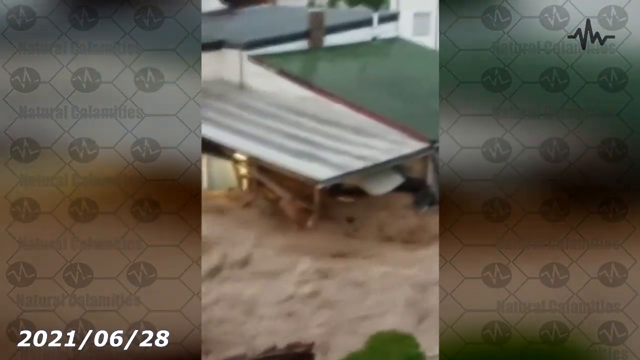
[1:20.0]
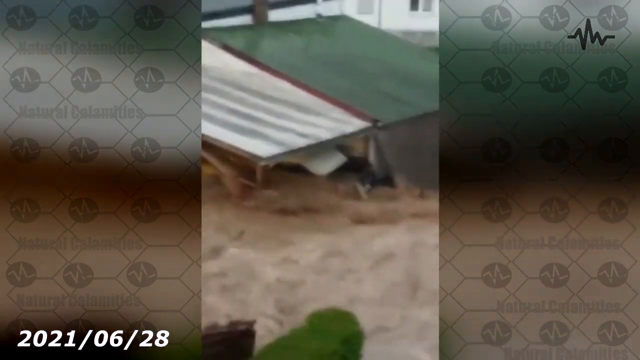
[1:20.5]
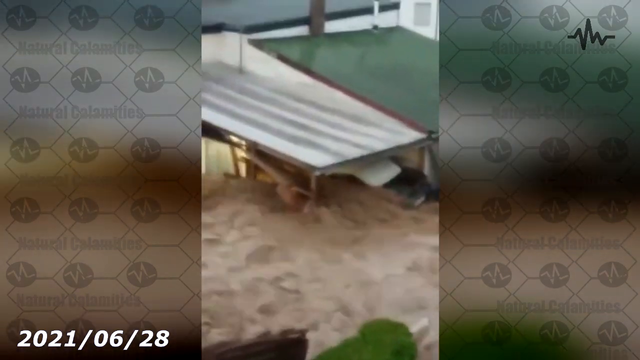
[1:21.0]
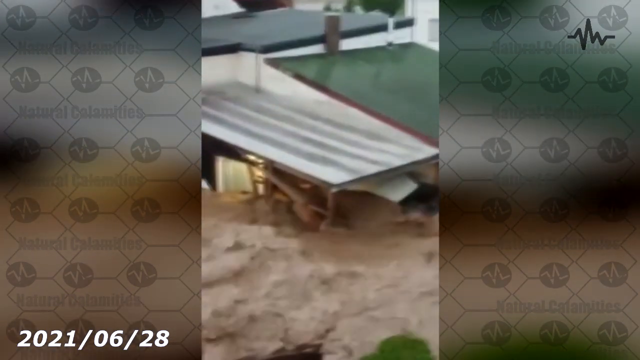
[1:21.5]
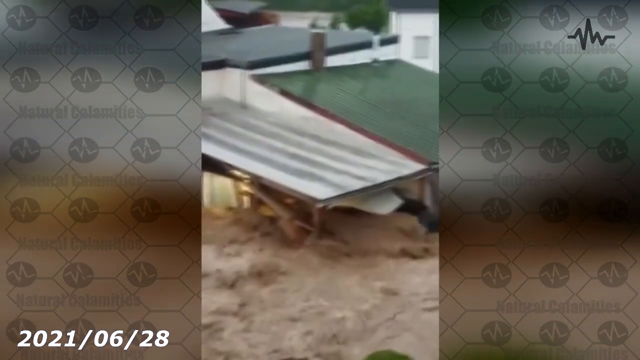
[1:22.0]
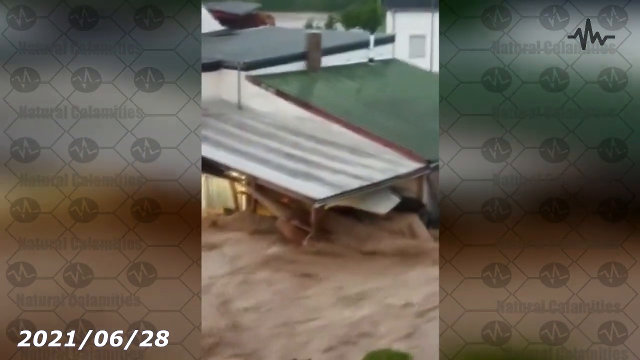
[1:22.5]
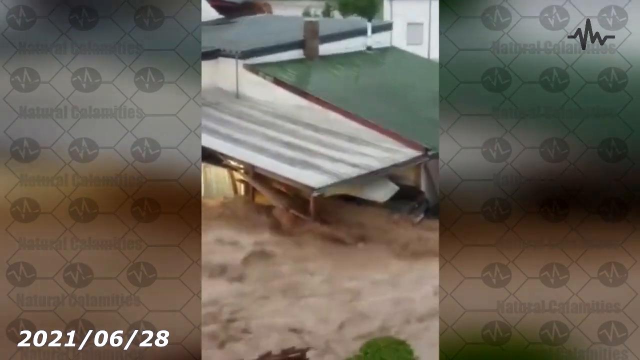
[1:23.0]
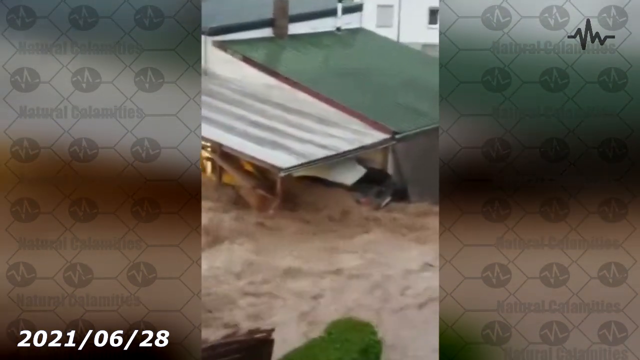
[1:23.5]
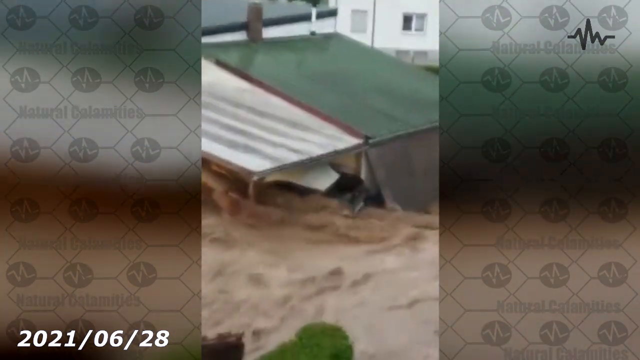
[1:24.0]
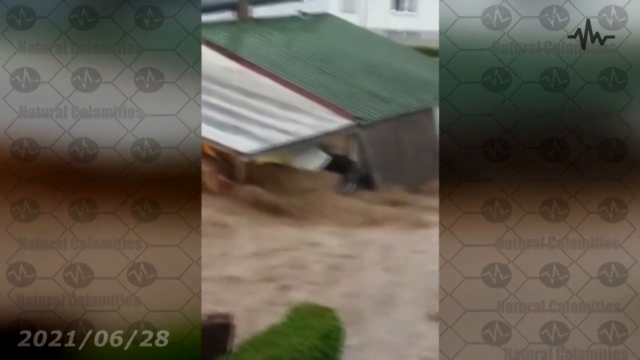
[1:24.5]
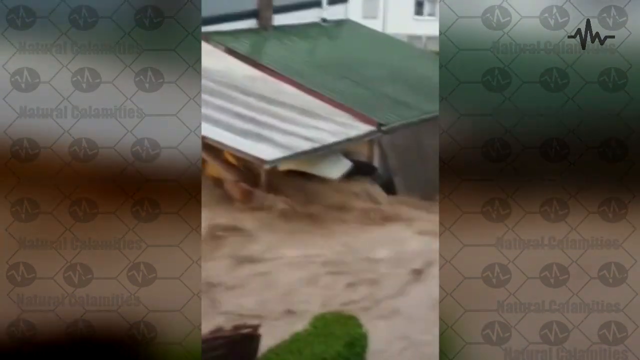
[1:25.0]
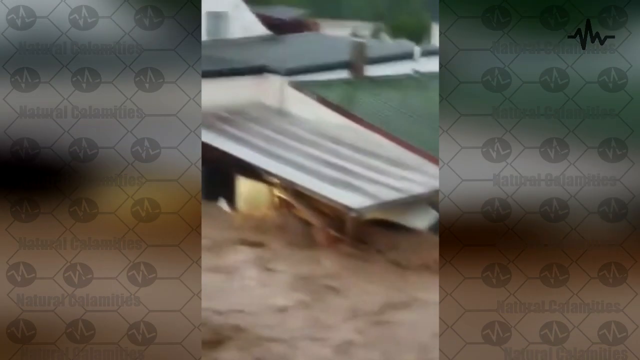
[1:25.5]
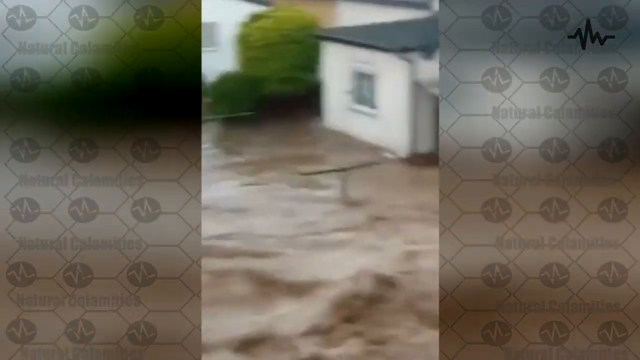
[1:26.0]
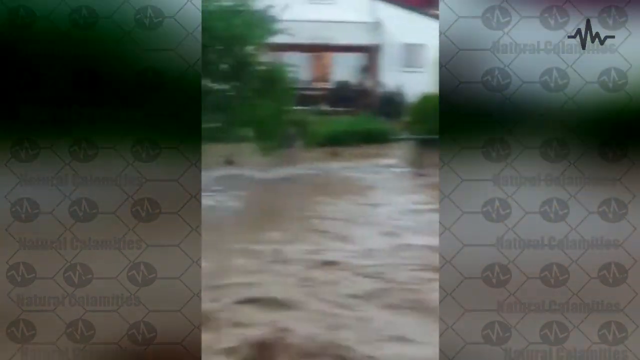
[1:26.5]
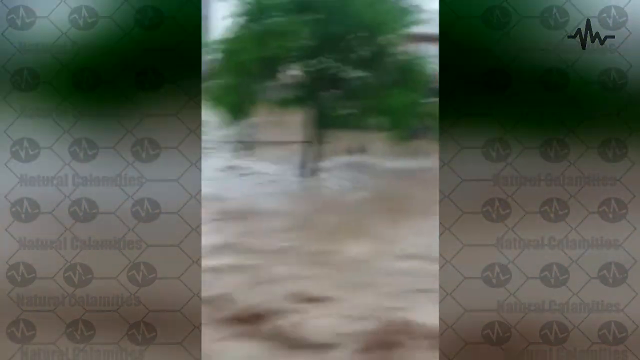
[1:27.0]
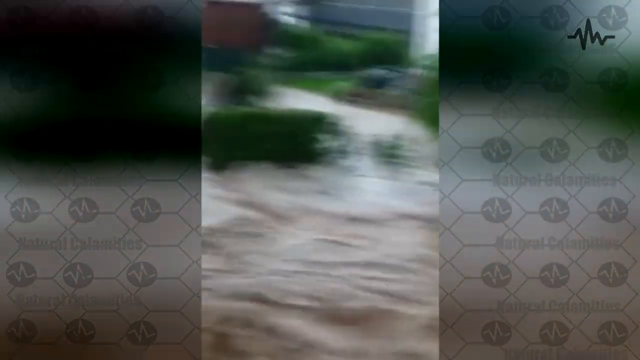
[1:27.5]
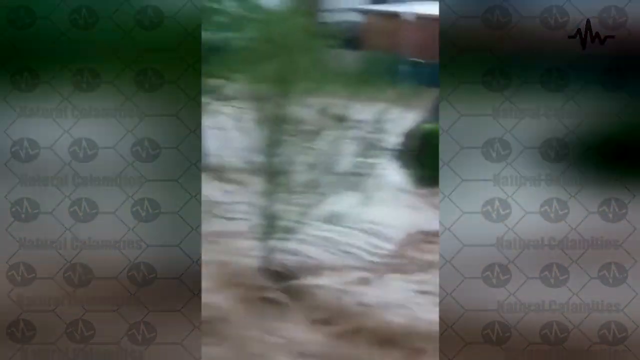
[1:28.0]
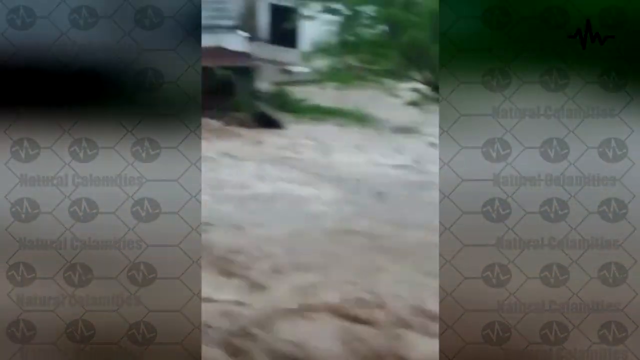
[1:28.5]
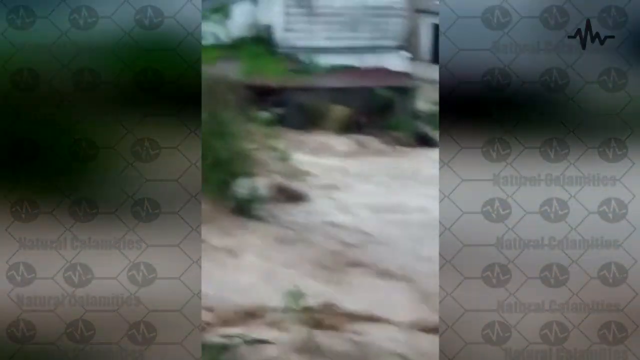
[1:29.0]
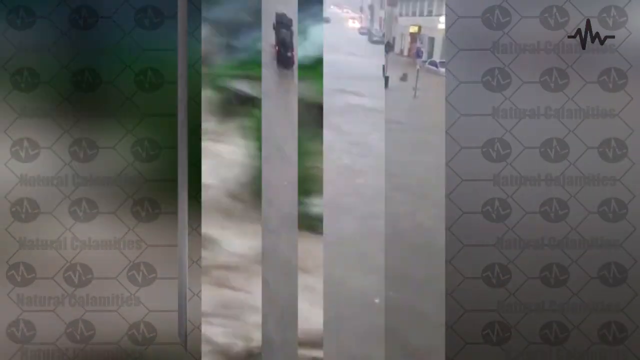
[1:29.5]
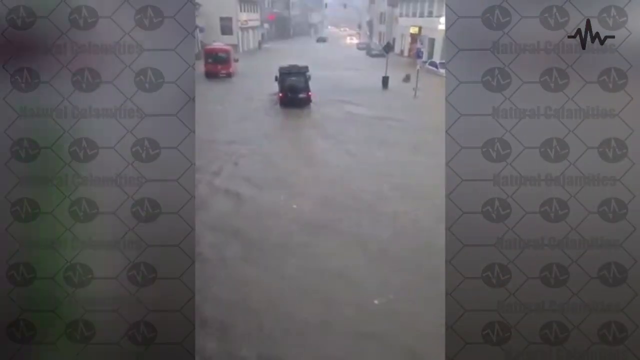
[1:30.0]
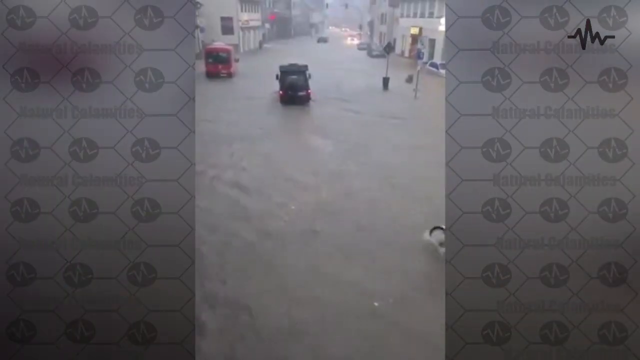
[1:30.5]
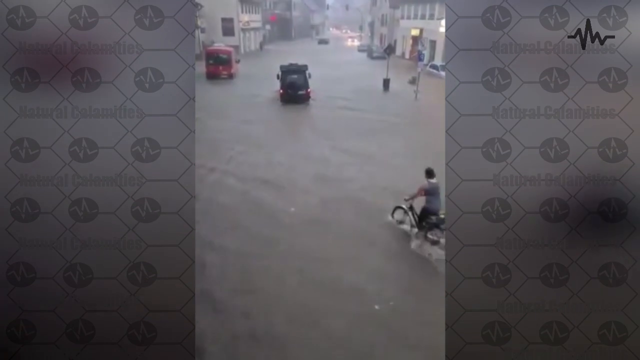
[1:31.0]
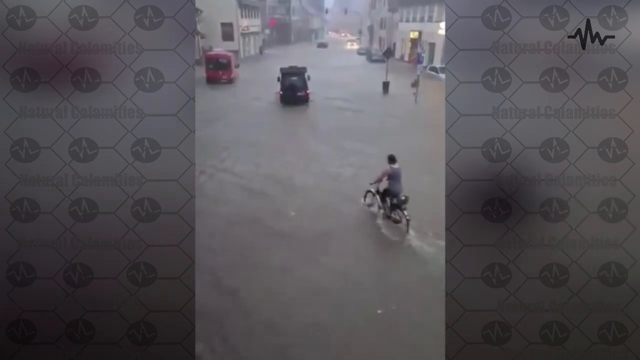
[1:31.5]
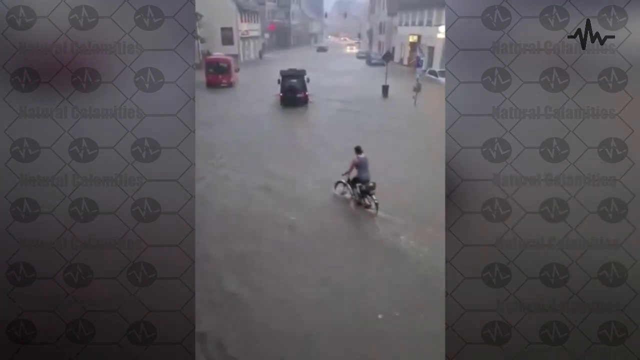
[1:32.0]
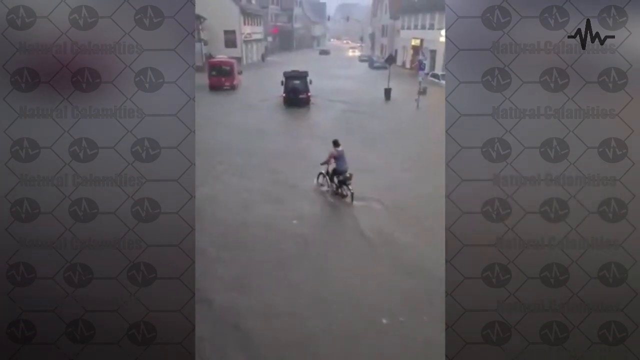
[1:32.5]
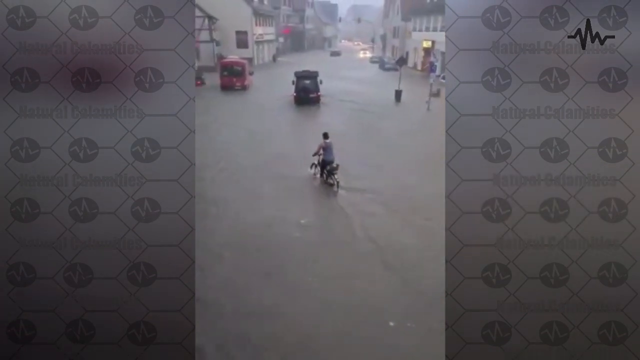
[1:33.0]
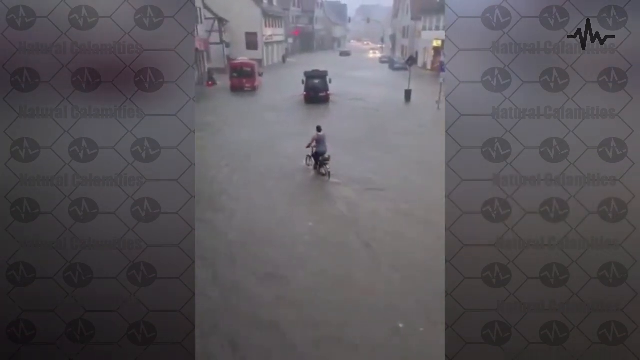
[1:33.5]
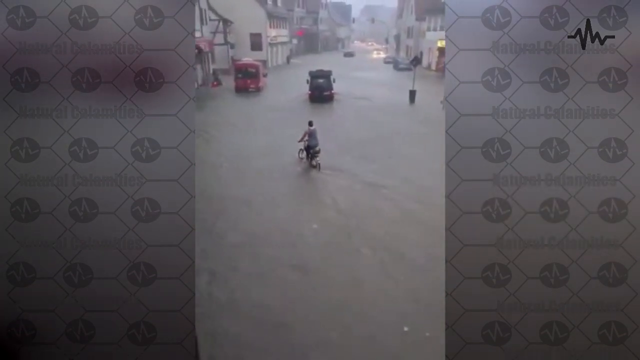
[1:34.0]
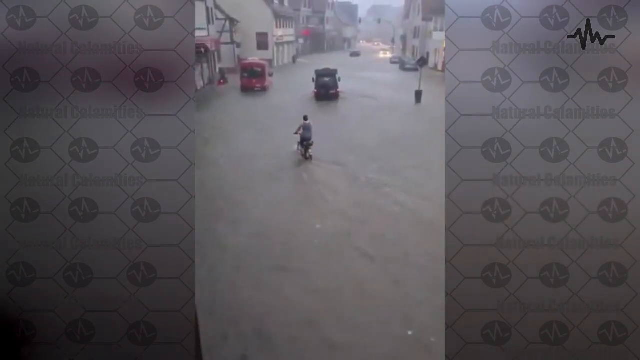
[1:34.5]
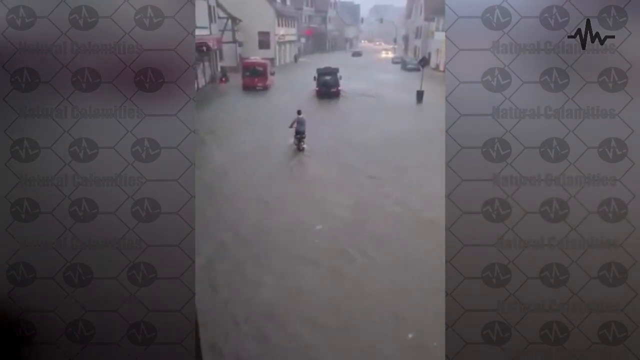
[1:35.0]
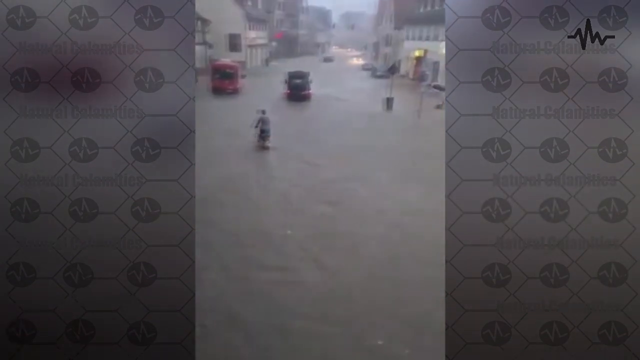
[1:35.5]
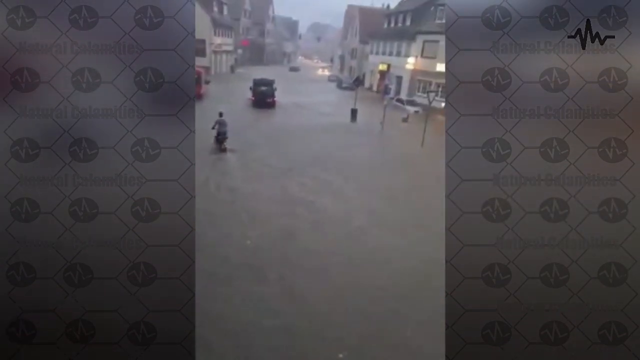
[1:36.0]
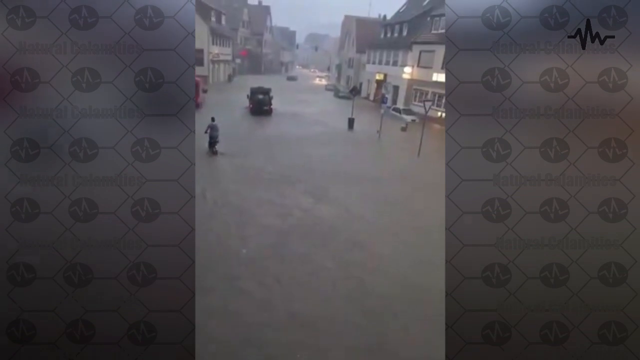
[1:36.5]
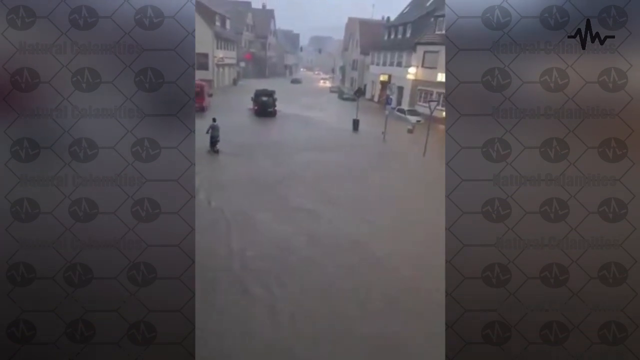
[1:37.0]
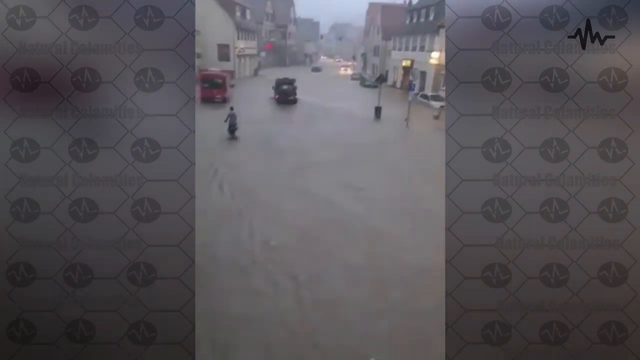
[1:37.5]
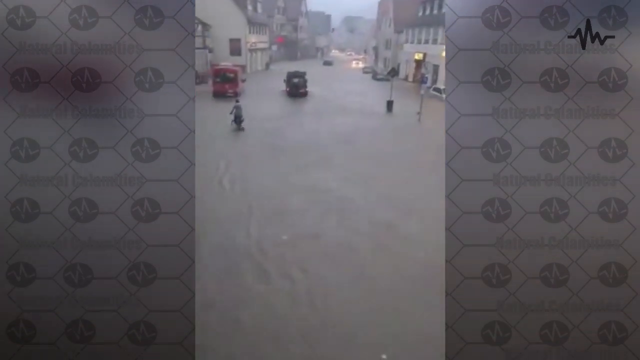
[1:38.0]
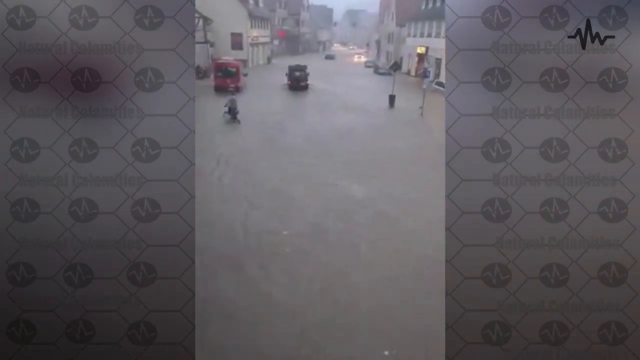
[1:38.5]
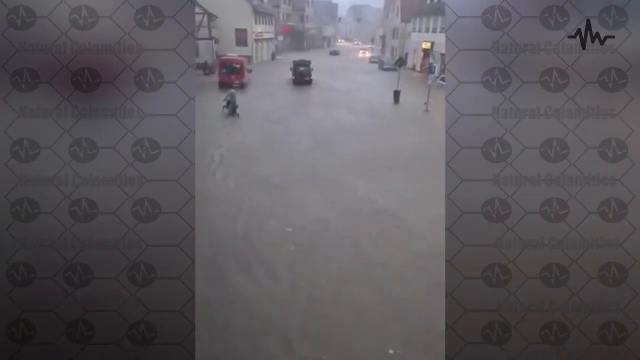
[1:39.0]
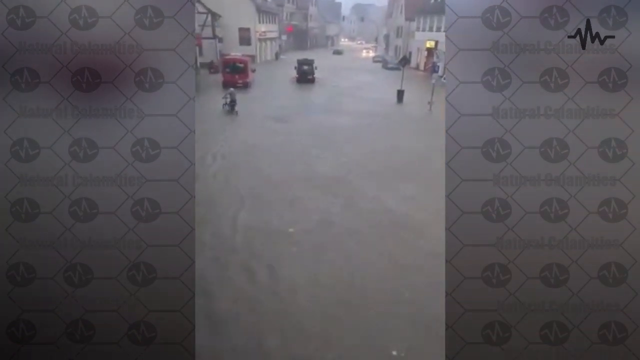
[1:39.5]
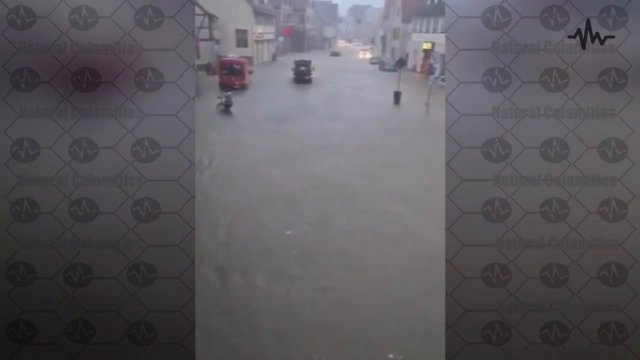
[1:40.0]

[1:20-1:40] The location of the flood is not named in the video. The only caption that appears is on one of the videos, a date in the lower left corner.